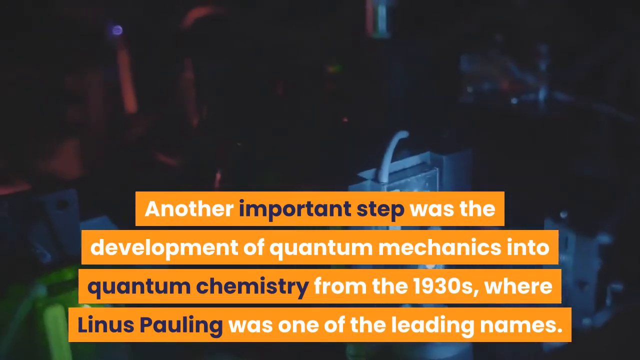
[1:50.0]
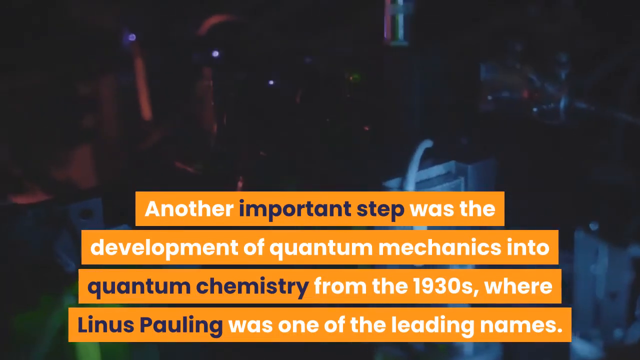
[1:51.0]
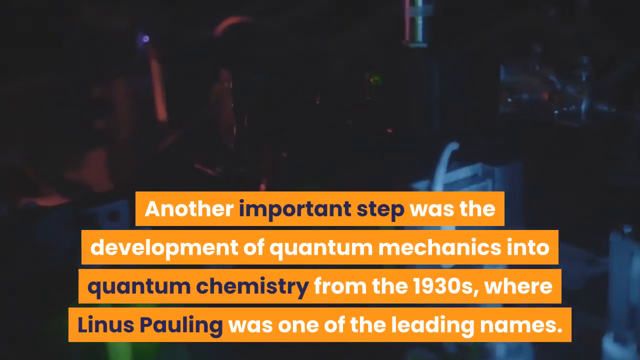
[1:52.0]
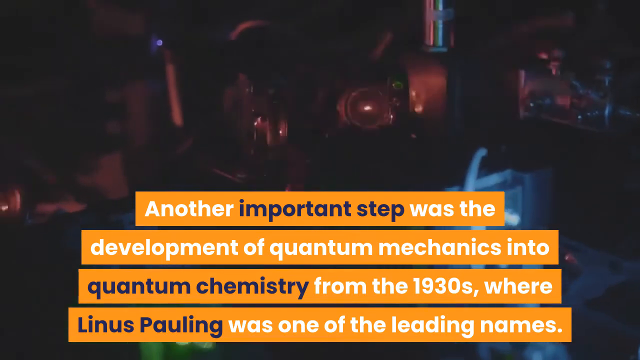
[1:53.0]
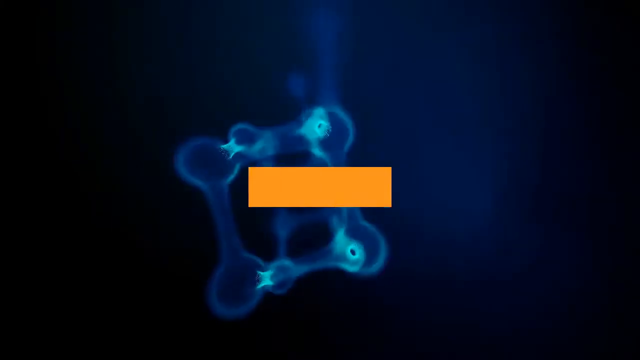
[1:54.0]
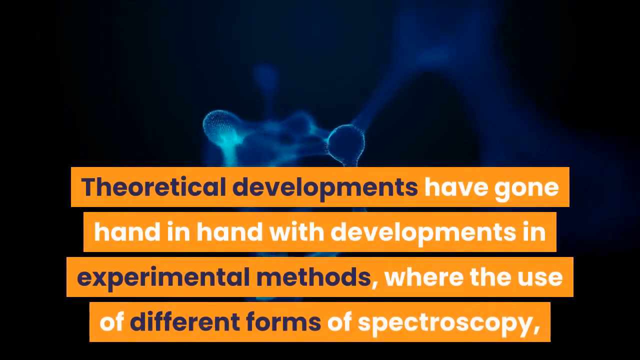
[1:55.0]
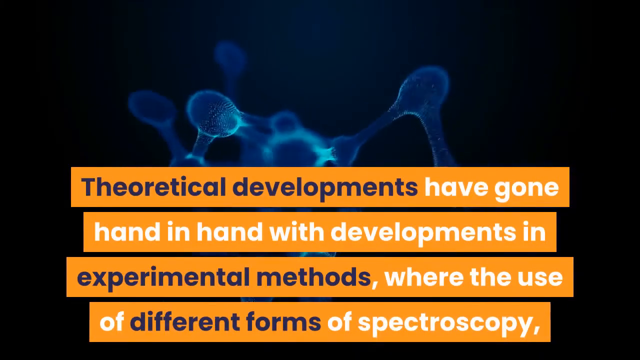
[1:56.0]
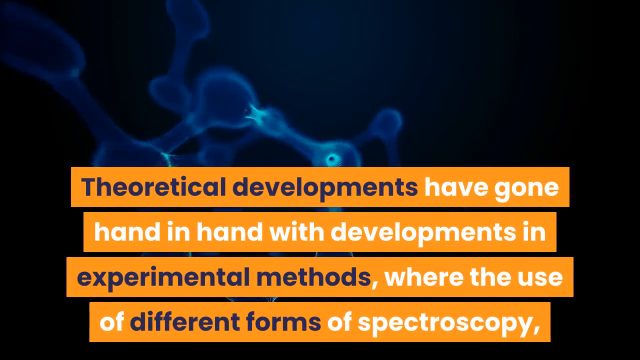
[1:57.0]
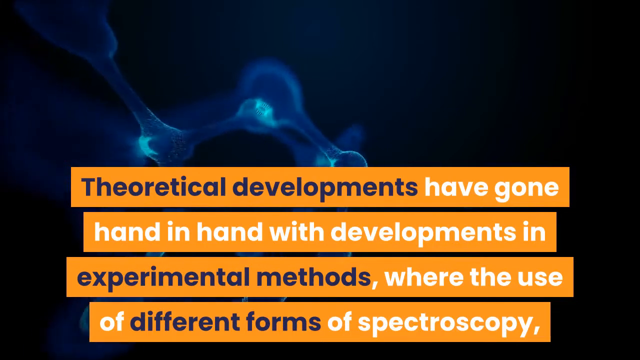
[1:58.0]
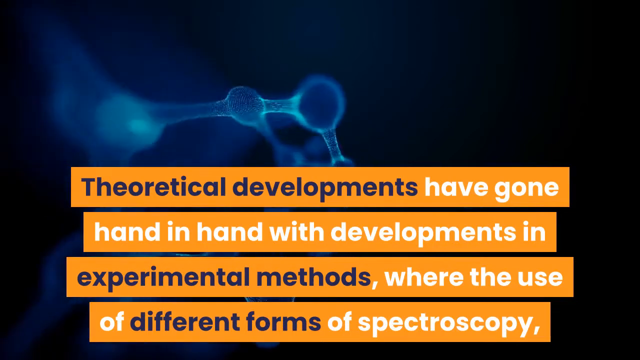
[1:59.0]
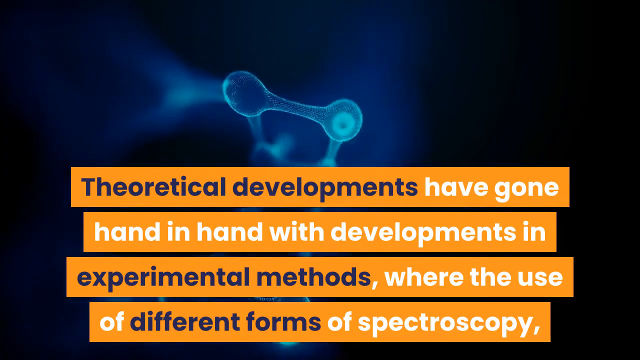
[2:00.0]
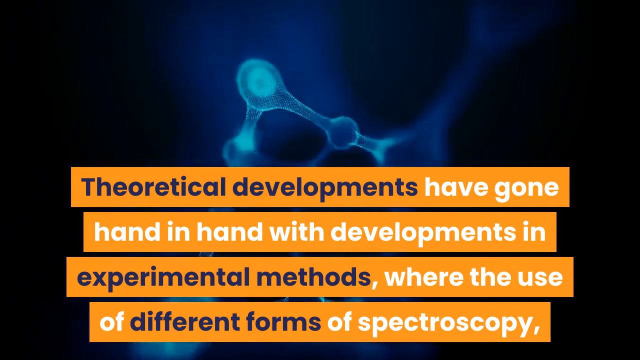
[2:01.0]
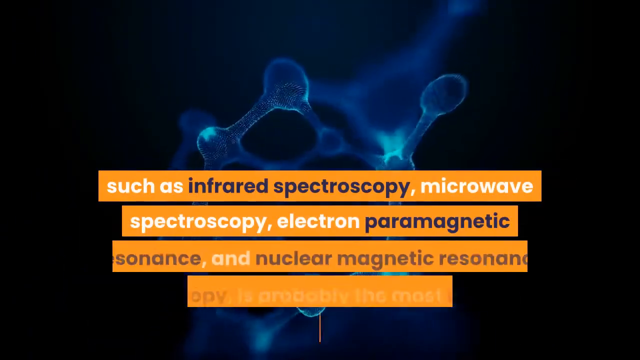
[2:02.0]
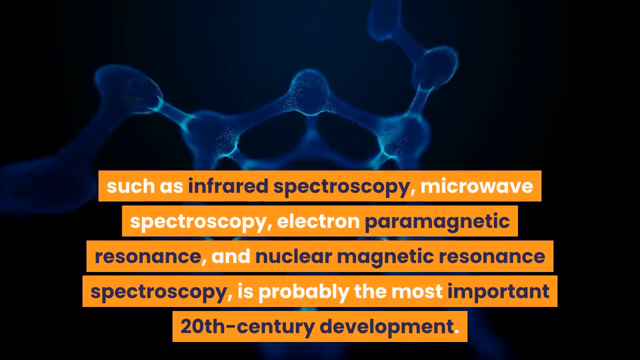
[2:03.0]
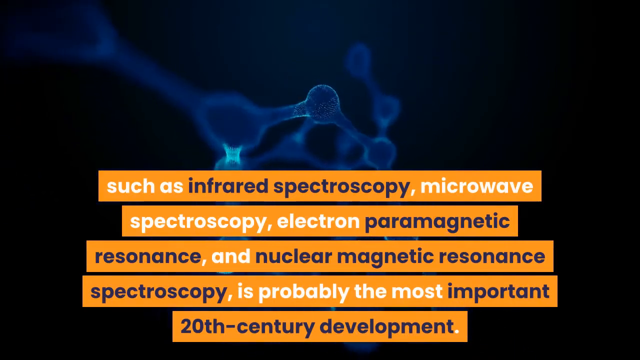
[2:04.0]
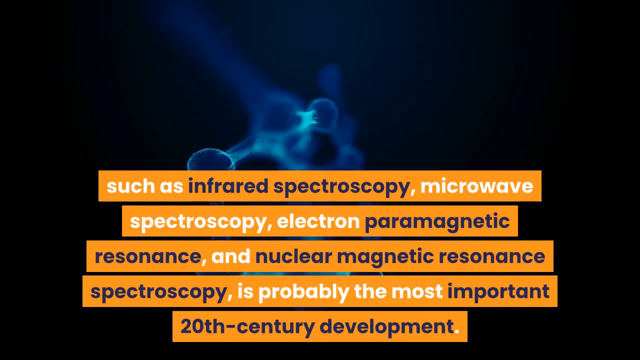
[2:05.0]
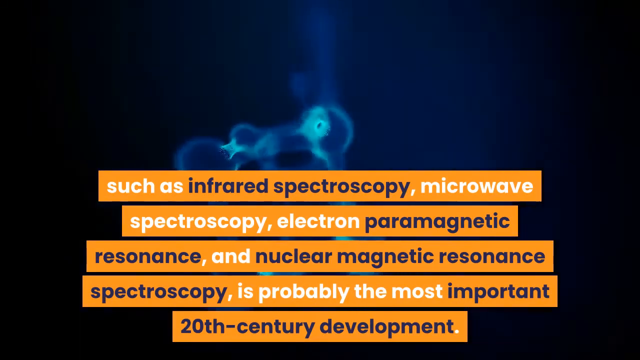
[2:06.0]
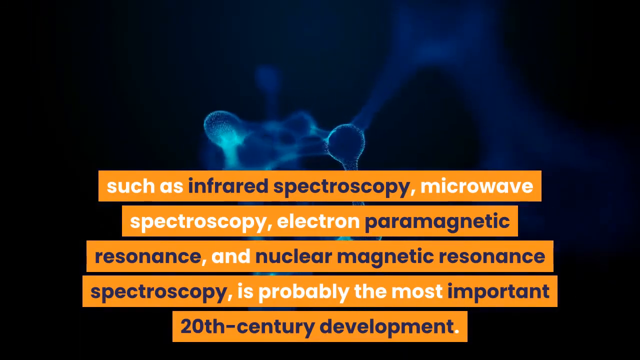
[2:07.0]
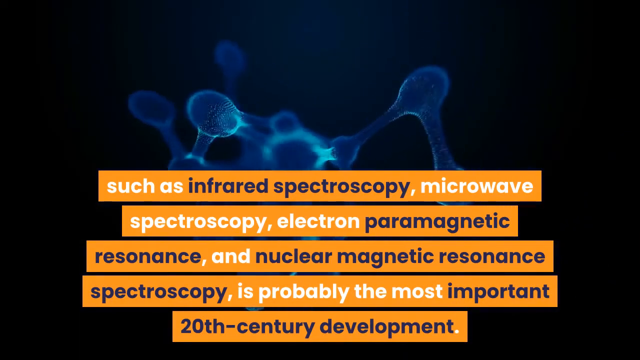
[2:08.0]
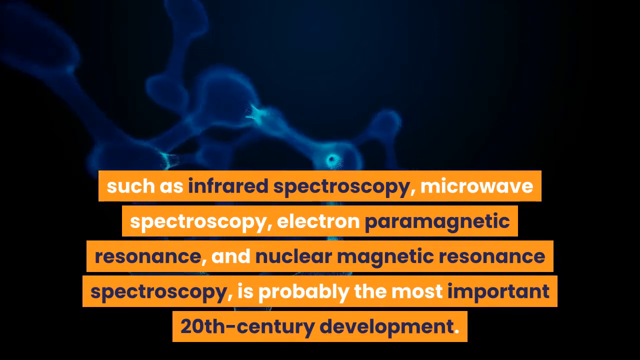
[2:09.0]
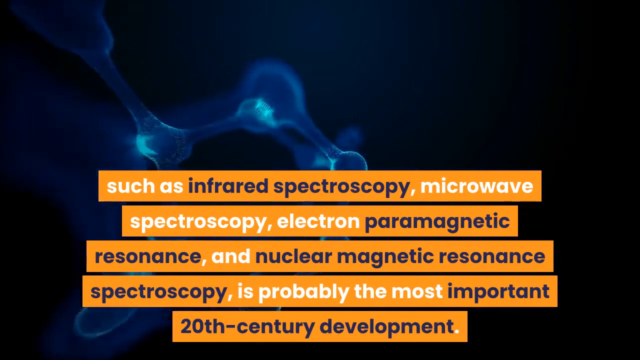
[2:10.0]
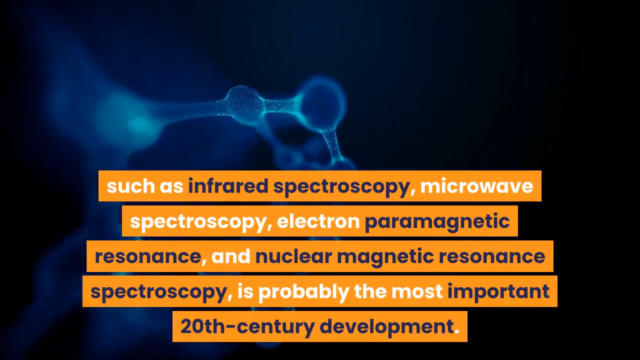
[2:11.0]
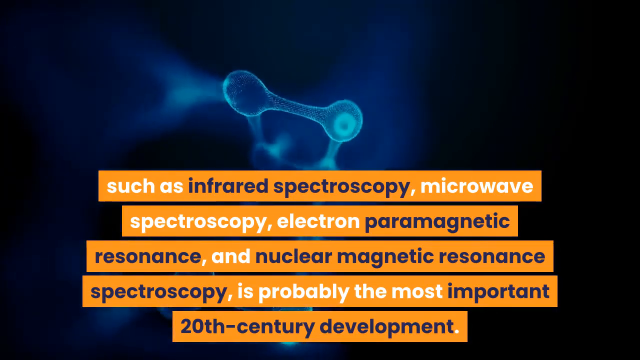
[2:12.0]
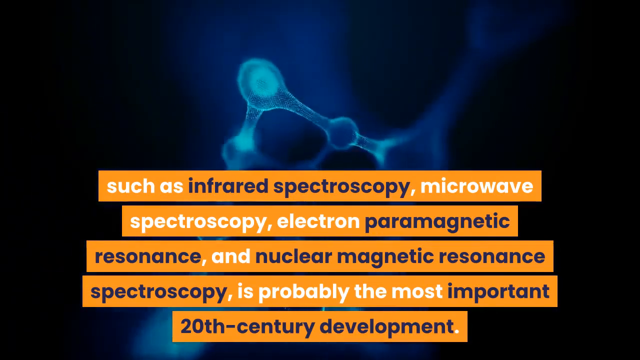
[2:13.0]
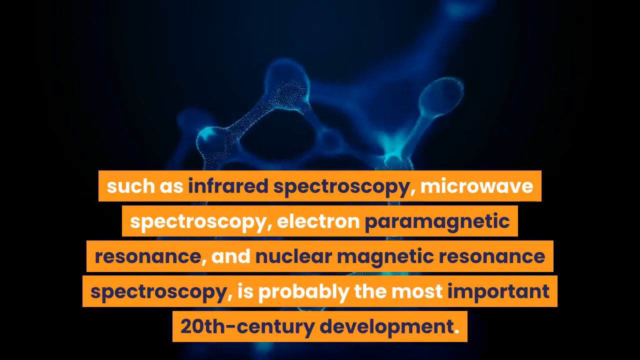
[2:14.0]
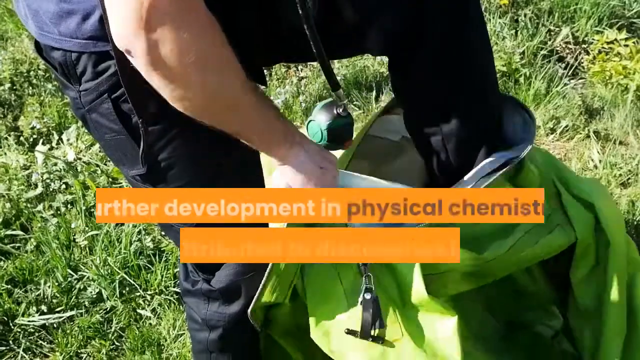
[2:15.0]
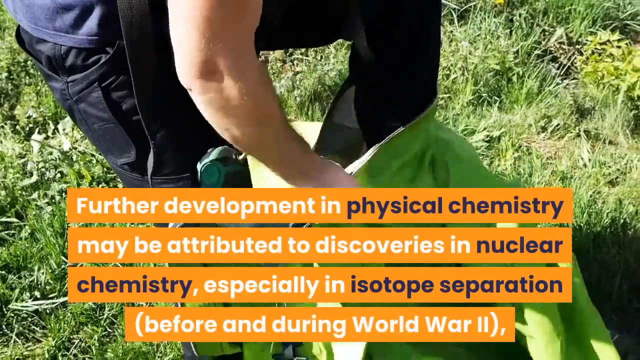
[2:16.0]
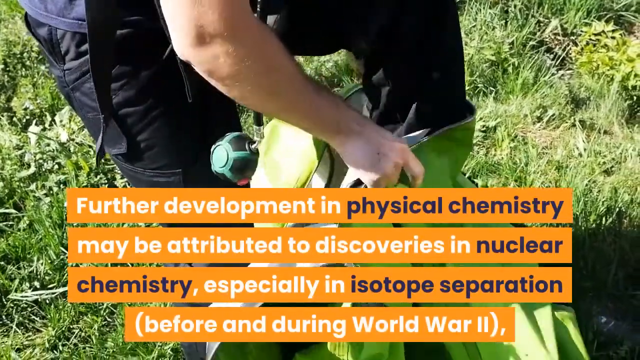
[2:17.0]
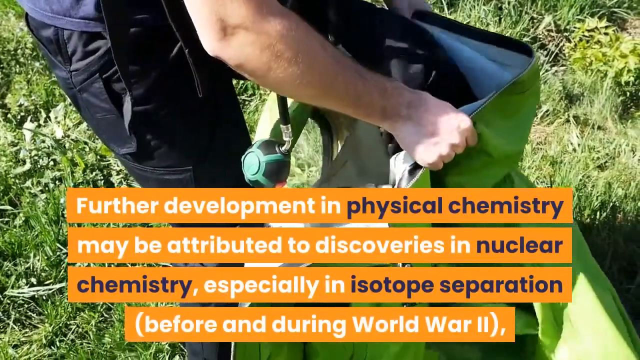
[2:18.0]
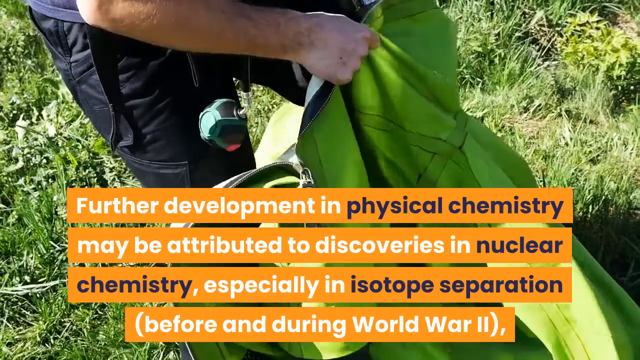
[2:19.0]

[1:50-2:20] A large piece of equipment blinks red, blue, and green lights in that order, each showing for about a second. The caption over the blinking machine states that quantum mechanics was developed into quantum chemistry and that from the 1930s Linus Pauling was one of the leading names. Another molecular structure appears, without its parts labeled as before. This caption describes how theoretical developments have gone hand in hand with experimental methods, using different forms of spectroscopy. The next slide covers infrared spectroscopy, microwave spectroscopy, electron parametric resonance, and nuclear magnetic resonance spectroscopy. The molecular structure rotates in the background, glowing with a blue light. The text describes these developments as probably the most important of the 20th century overall.